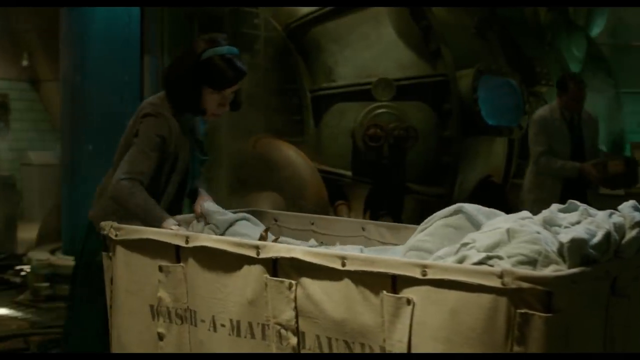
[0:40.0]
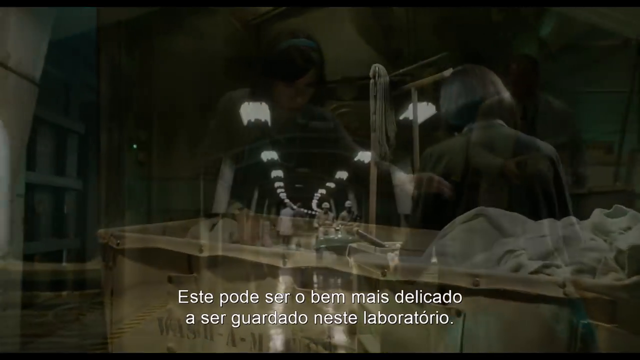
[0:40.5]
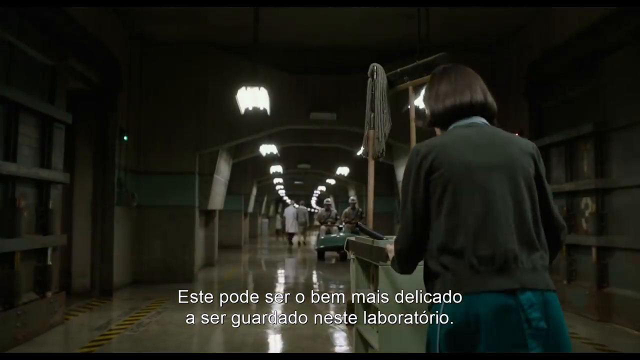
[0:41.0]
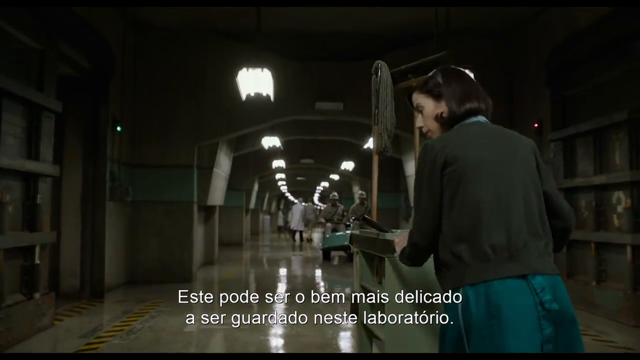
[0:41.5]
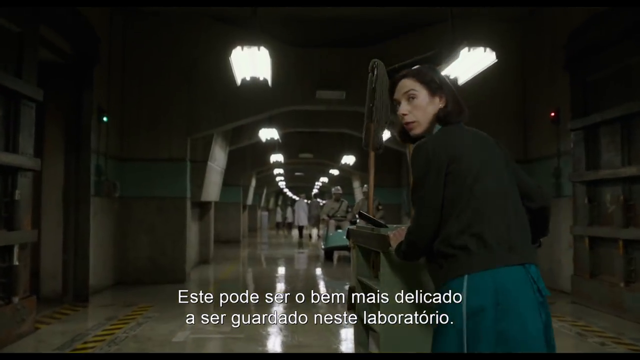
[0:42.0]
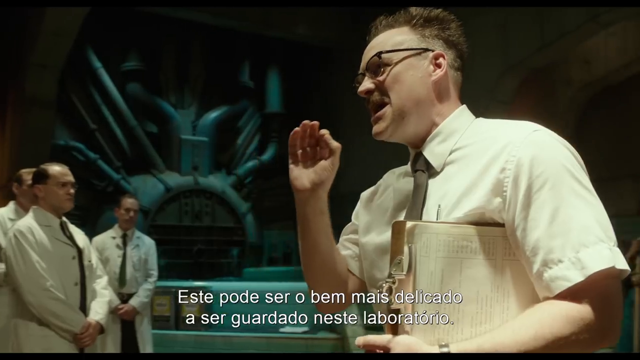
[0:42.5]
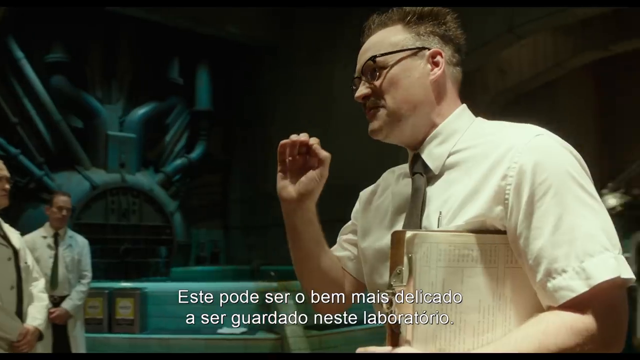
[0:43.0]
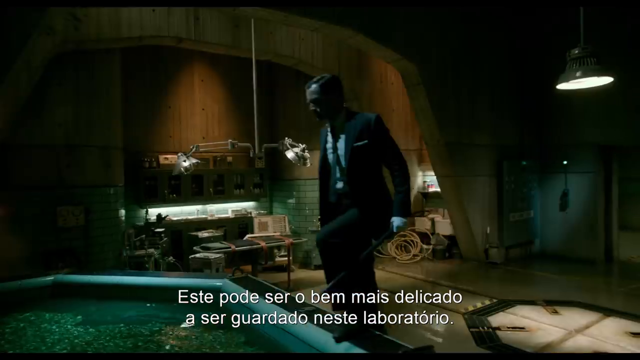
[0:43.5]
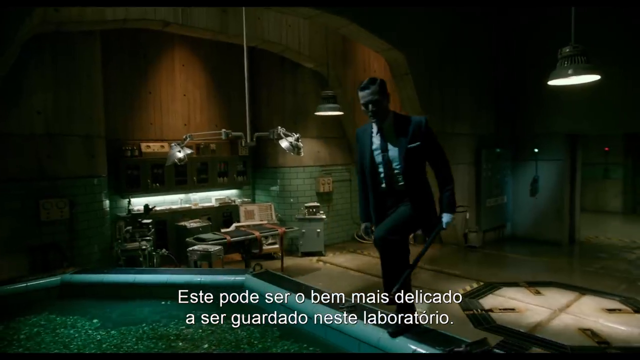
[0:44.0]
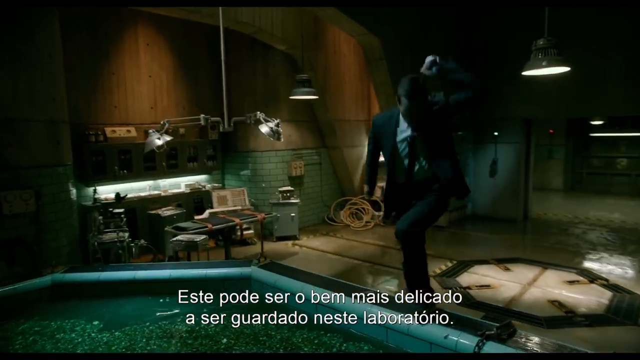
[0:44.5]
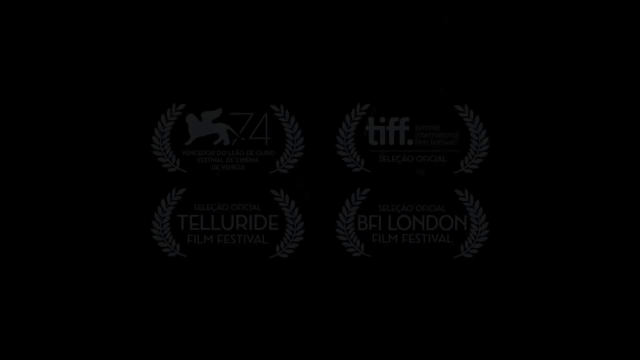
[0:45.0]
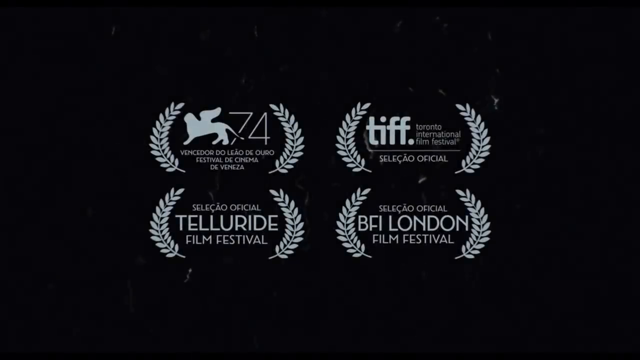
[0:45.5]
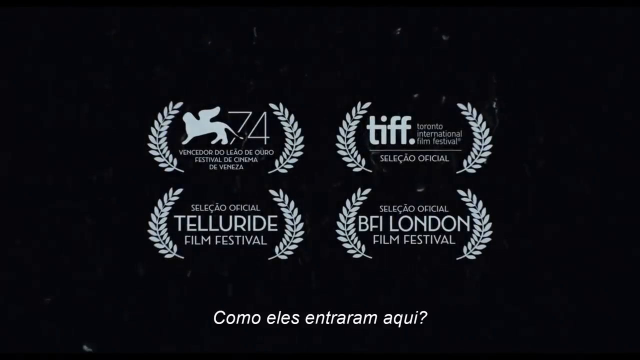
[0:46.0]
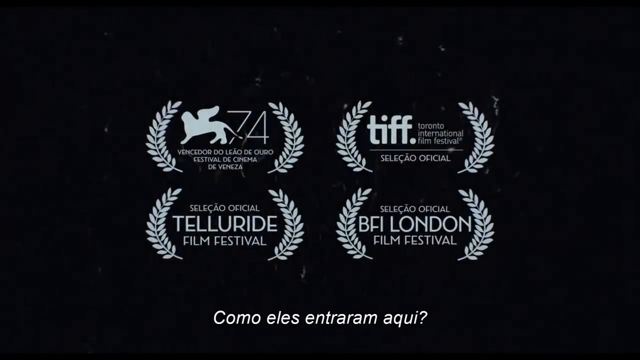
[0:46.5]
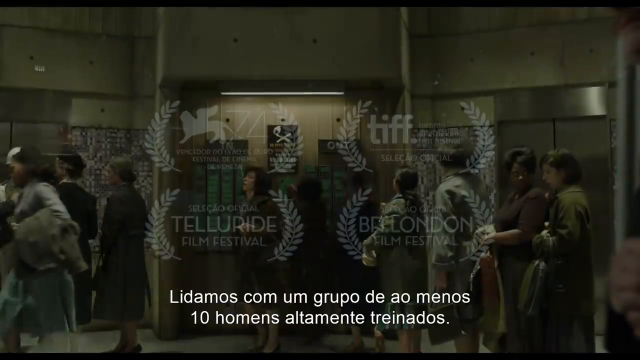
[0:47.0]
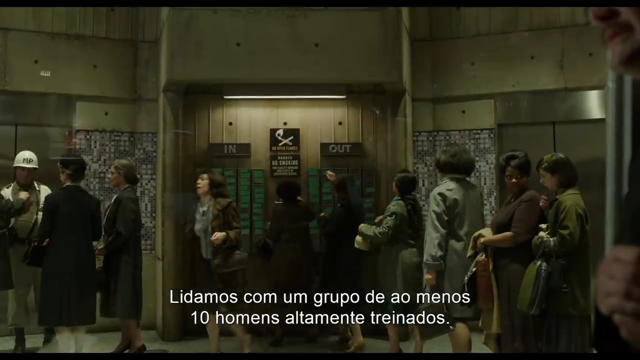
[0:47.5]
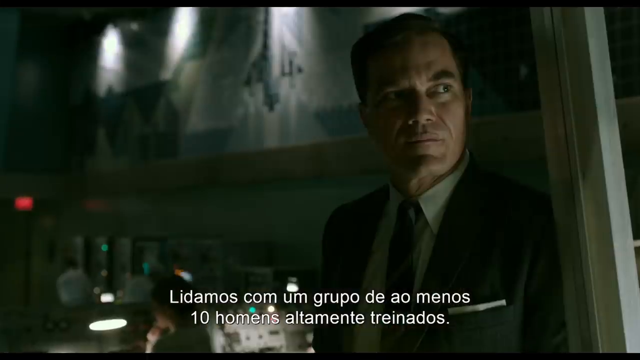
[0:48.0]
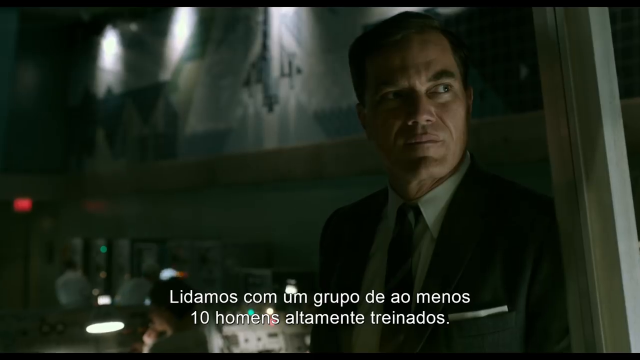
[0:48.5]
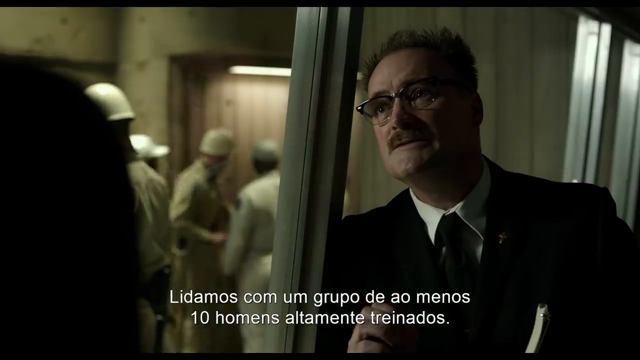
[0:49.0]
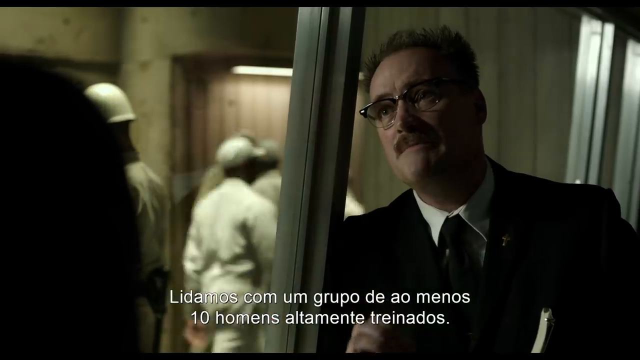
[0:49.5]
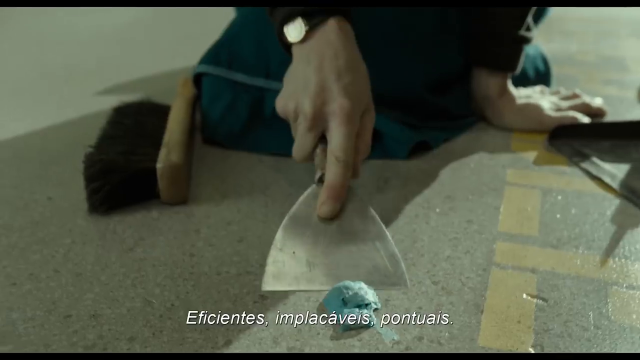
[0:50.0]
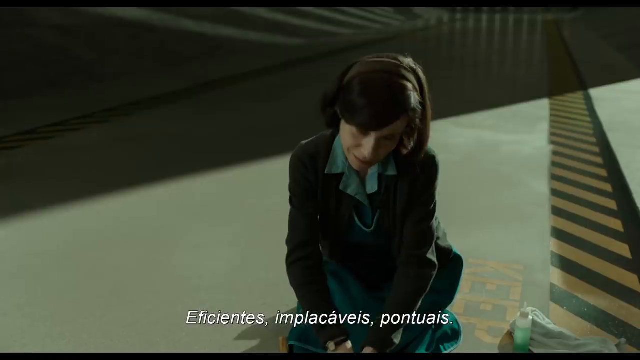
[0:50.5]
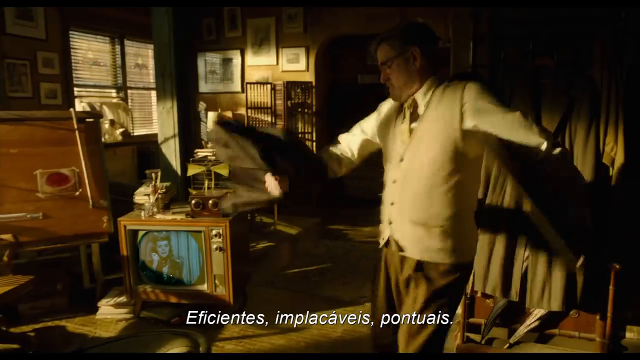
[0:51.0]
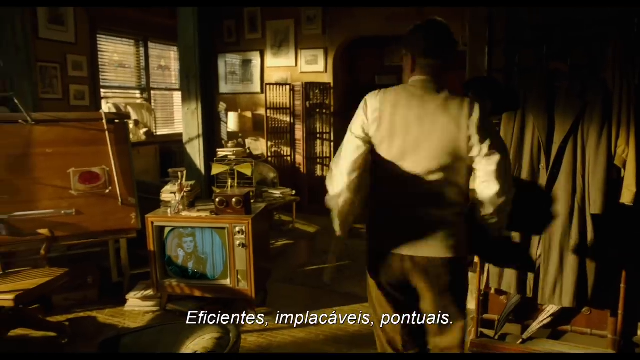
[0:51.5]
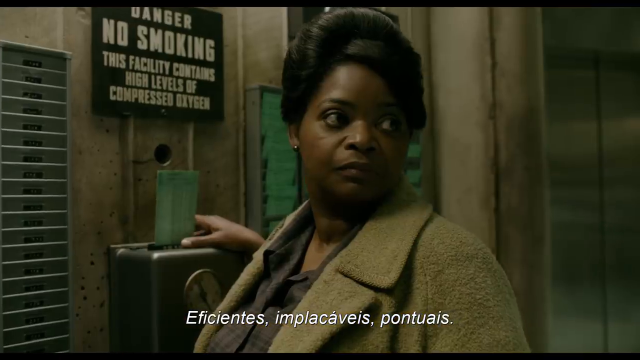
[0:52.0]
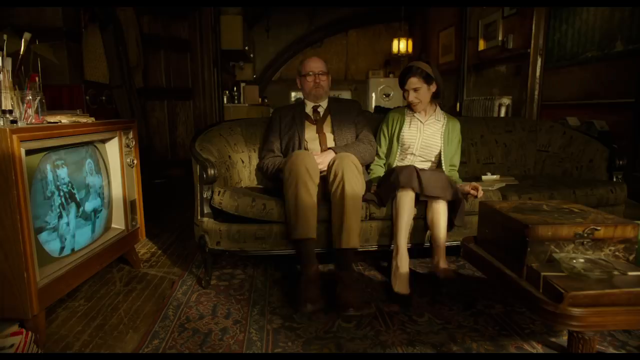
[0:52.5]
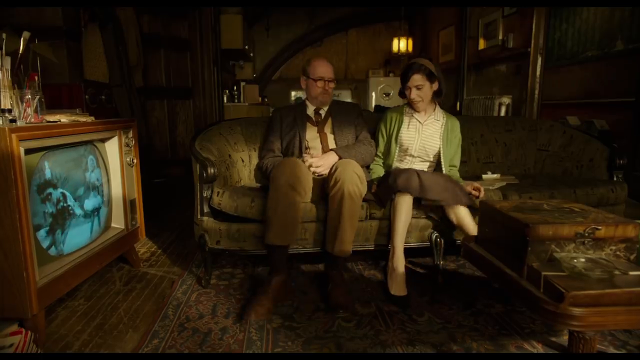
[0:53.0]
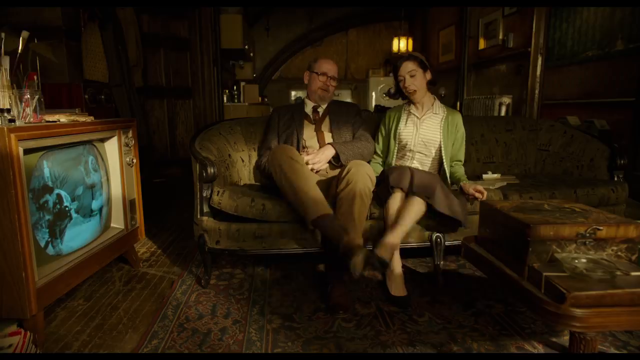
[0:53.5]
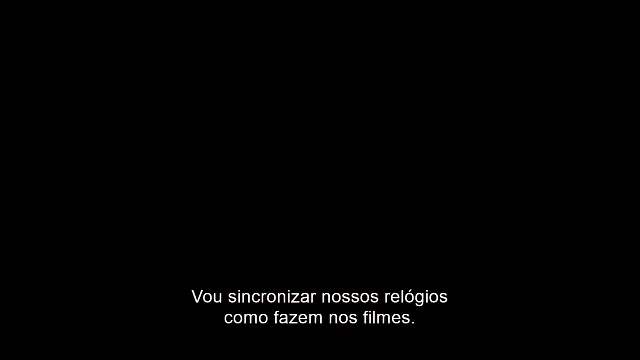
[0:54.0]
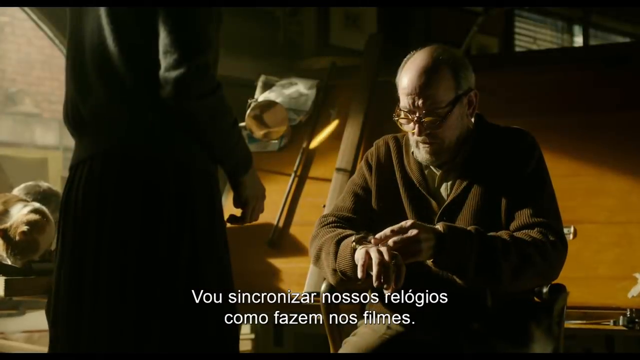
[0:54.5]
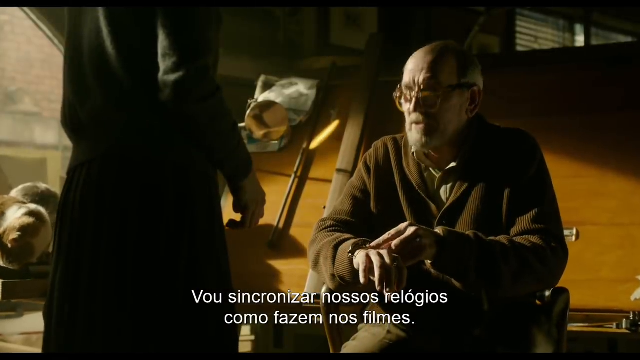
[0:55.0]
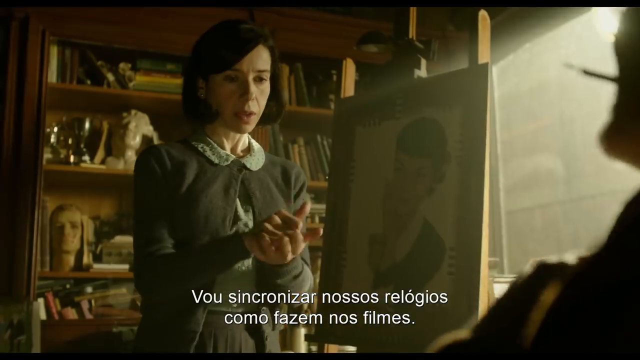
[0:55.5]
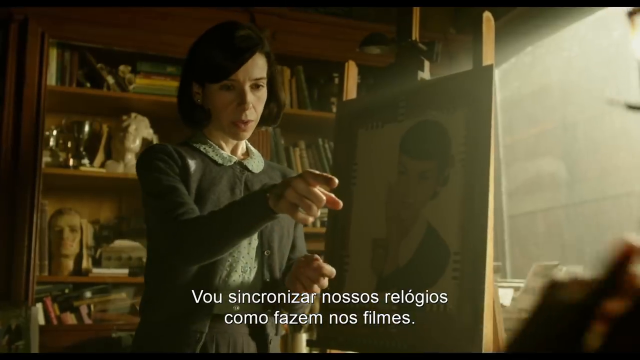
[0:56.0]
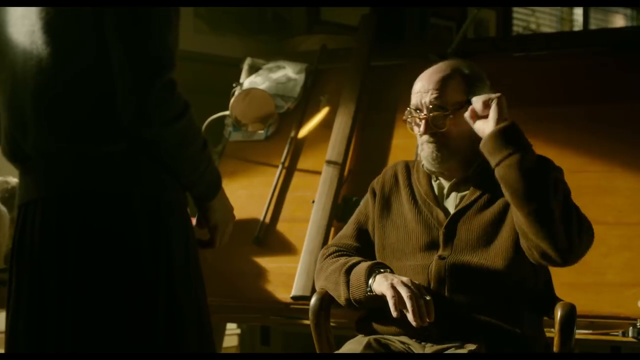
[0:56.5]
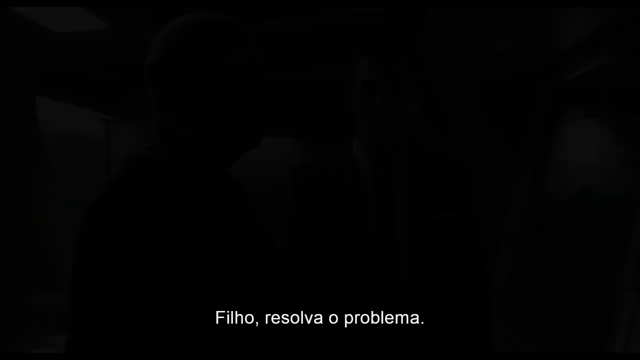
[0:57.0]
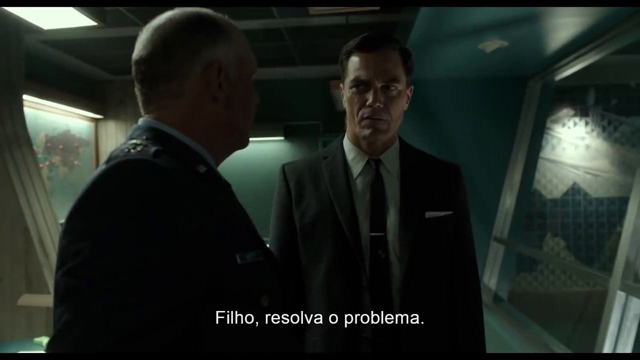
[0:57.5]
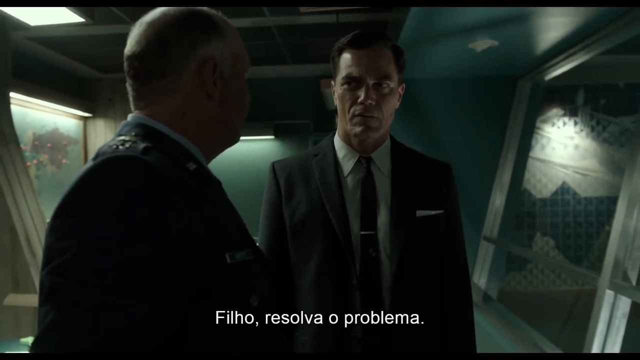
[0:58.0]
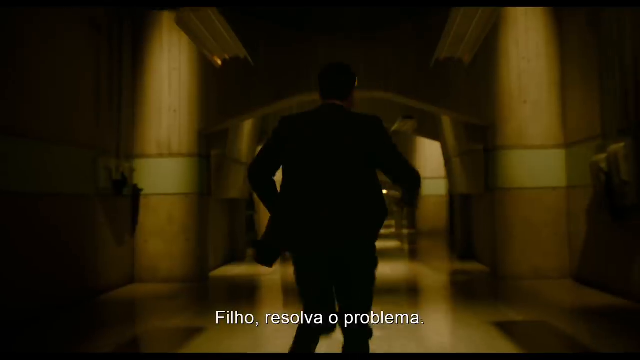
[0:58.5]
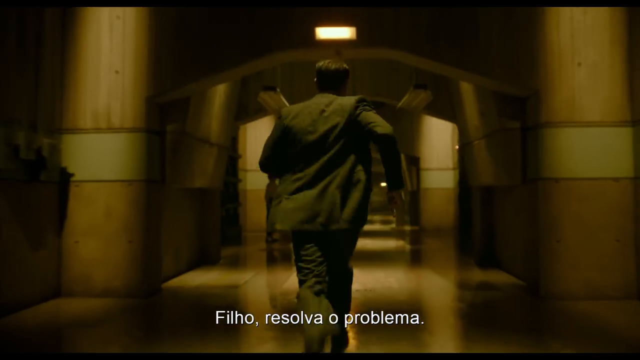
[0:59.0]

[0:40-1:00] A woman has a big cart that looks like it holds laundry. She is dressed in older-style clothing, maybe from the early to mid 1900s, and she appears to be in a boiler room or similar, with something that looks like a boiler behind her. The scene changes to a long hallway that curves in the distance, with fluorescent lights all through it and on the ceiling. A woman on the right side of the screen, wearing a green sweater and with dark brown hair, pushes a different kind of cart and looks behind her. The scene then changes to four Caucasian men: three in the bottom left corner of the screen and one on the right side, more close up. White text at the bottom of the screen says "Este pode ser o bem mais delicado a ser guardado neste laboratorio."